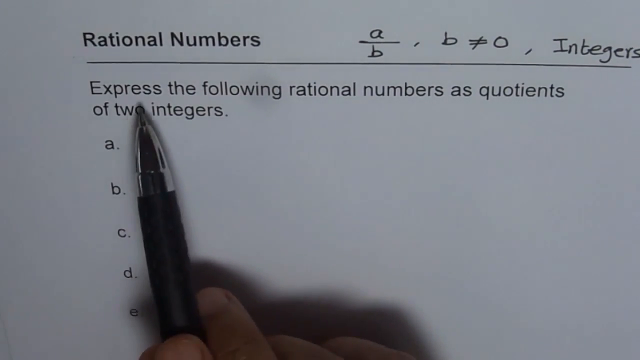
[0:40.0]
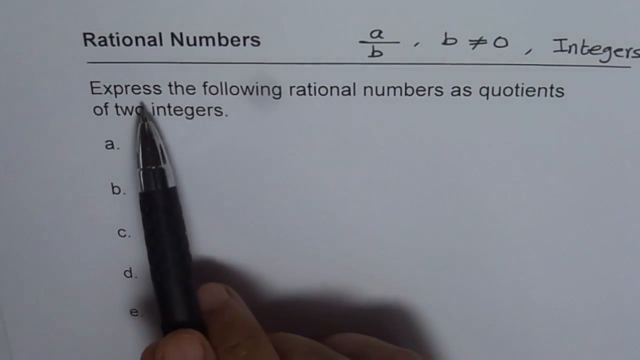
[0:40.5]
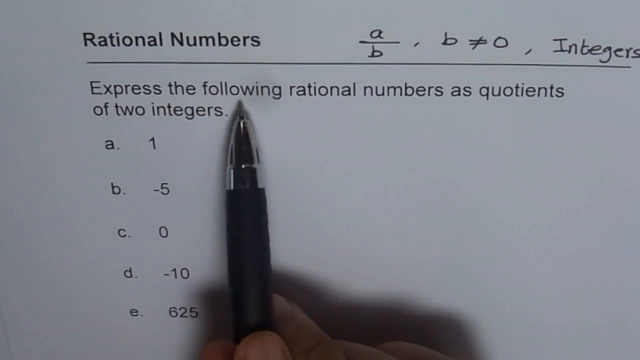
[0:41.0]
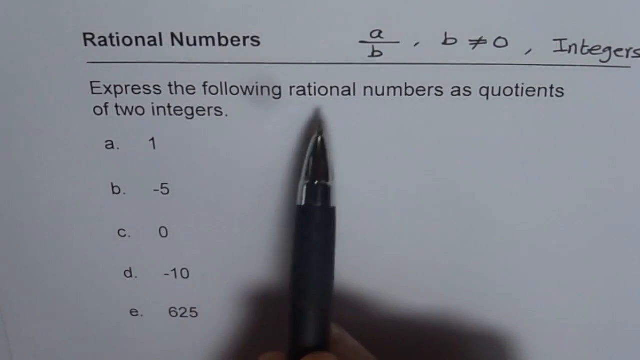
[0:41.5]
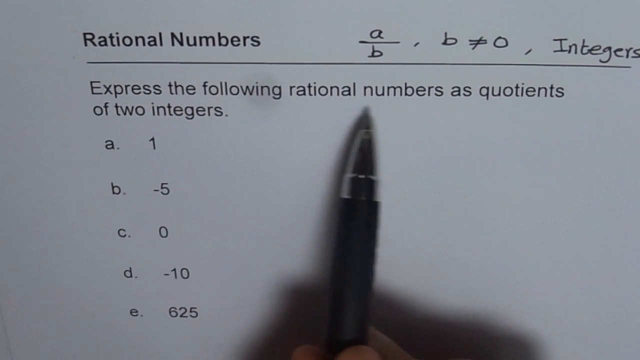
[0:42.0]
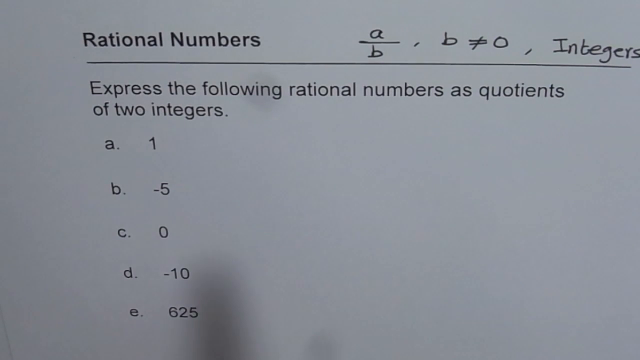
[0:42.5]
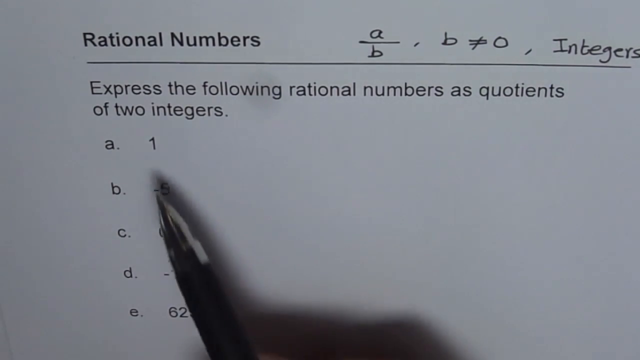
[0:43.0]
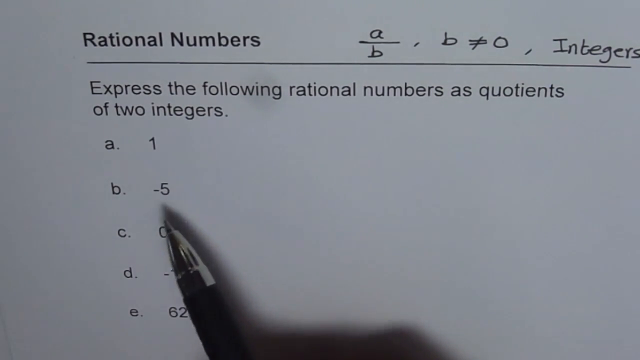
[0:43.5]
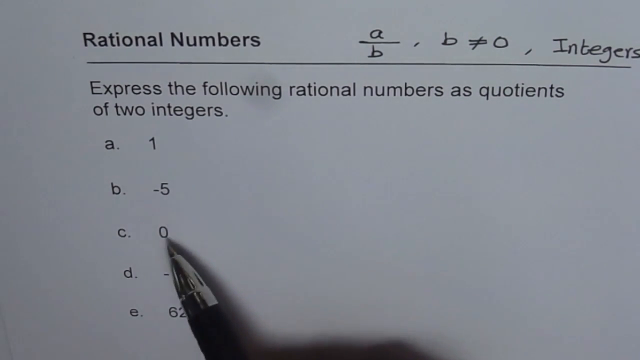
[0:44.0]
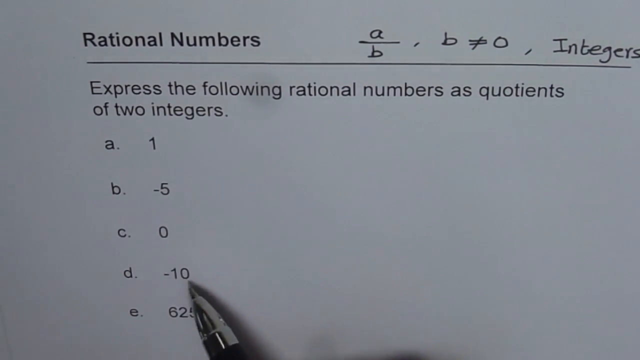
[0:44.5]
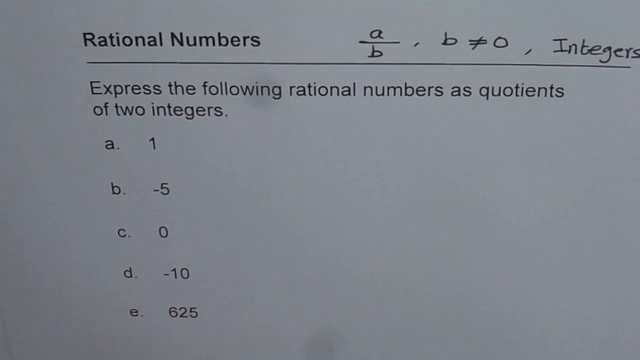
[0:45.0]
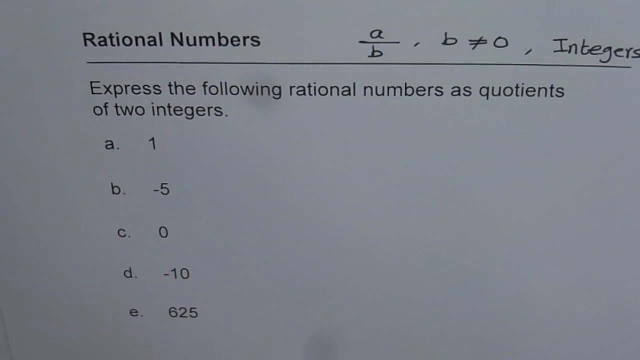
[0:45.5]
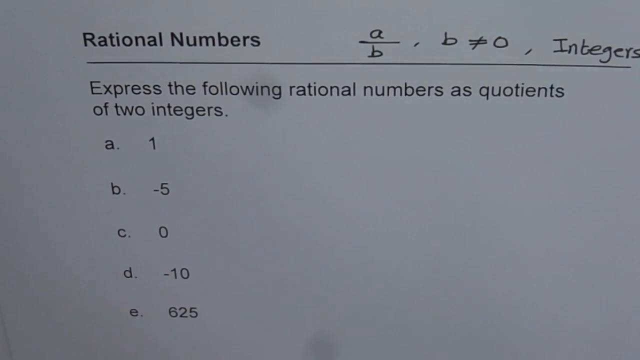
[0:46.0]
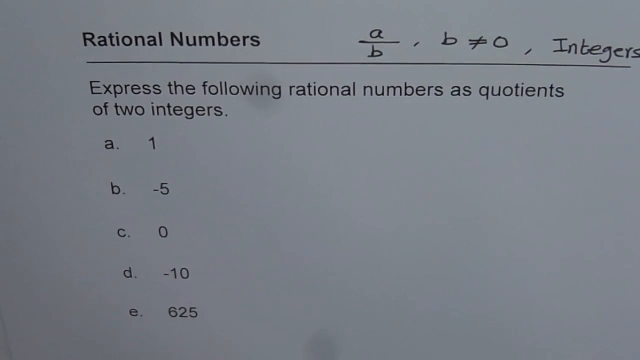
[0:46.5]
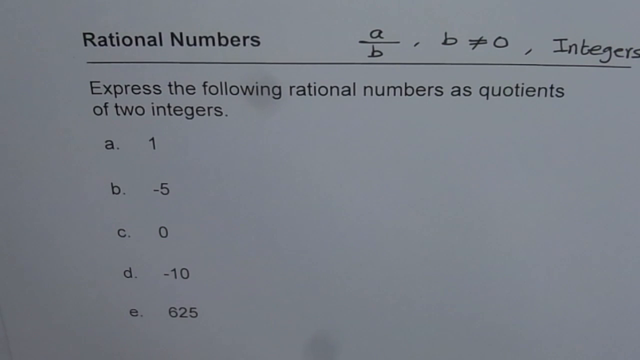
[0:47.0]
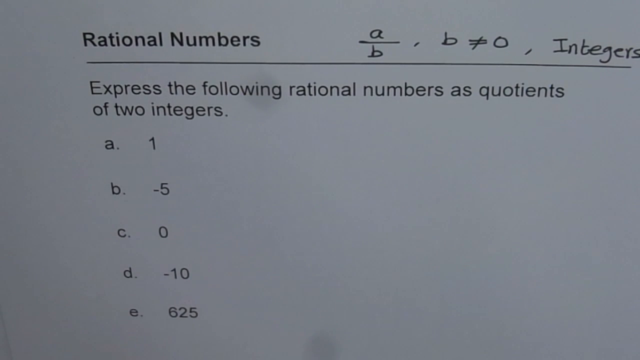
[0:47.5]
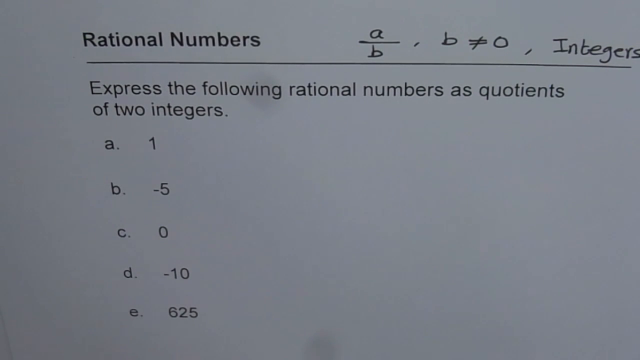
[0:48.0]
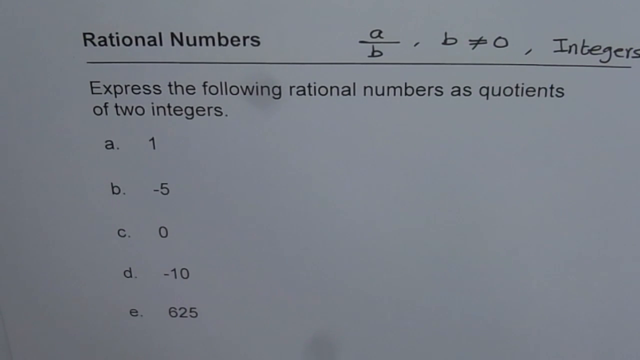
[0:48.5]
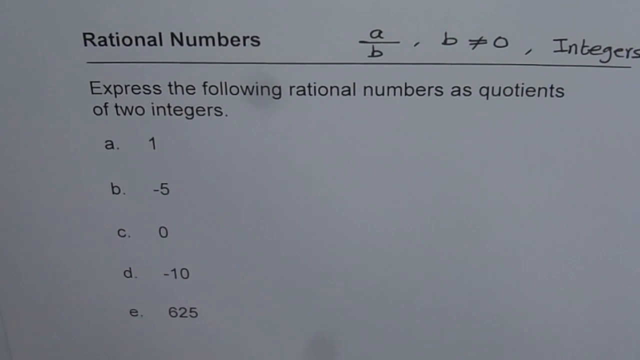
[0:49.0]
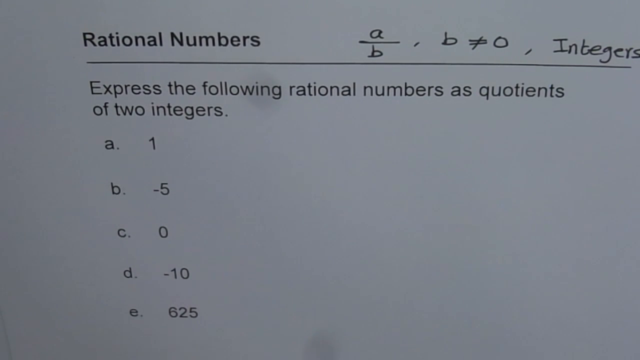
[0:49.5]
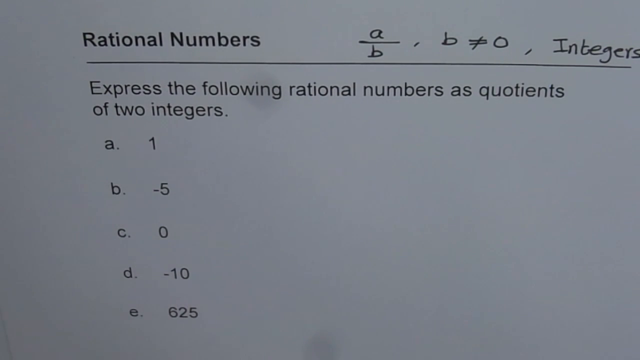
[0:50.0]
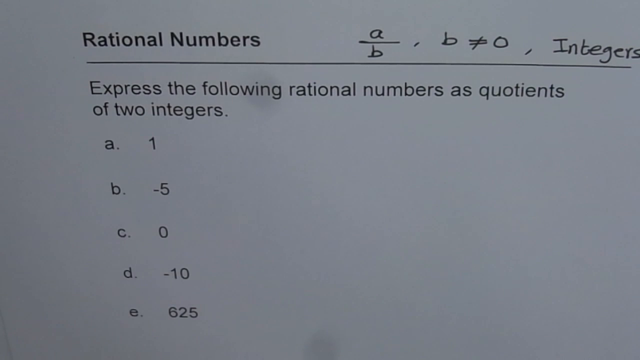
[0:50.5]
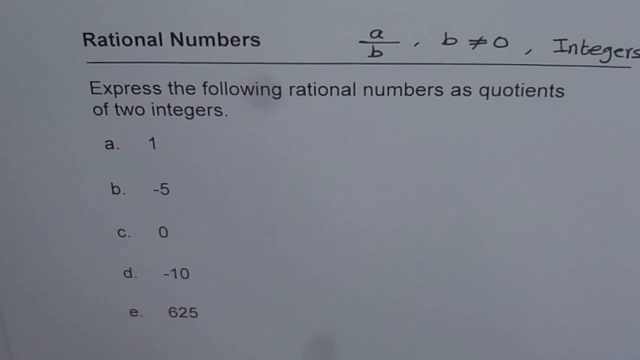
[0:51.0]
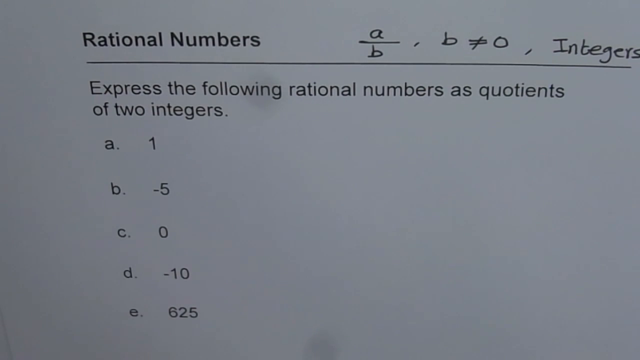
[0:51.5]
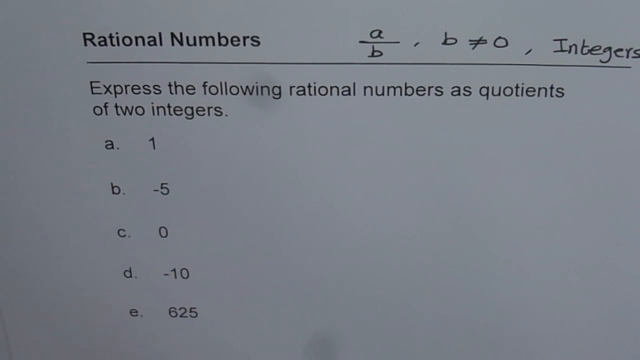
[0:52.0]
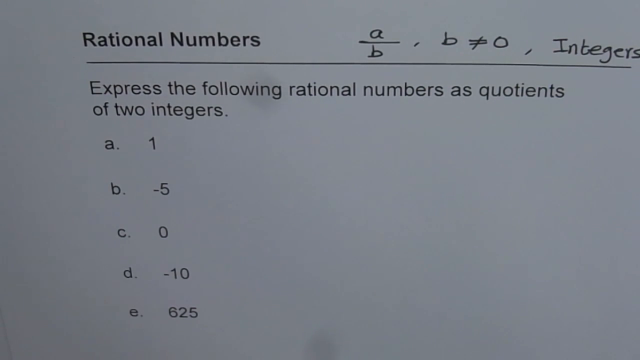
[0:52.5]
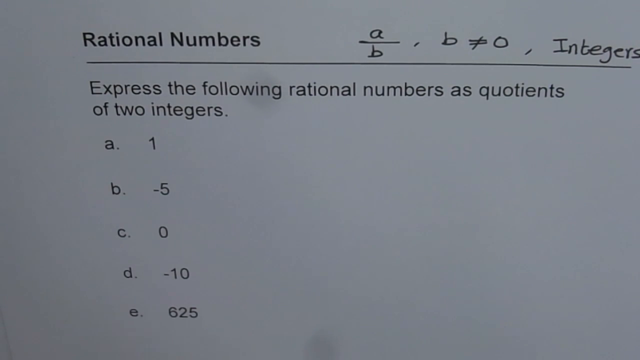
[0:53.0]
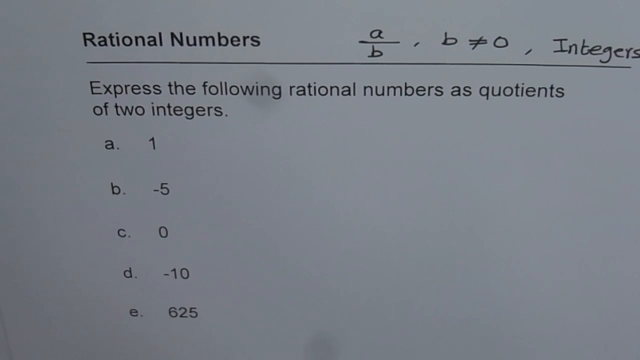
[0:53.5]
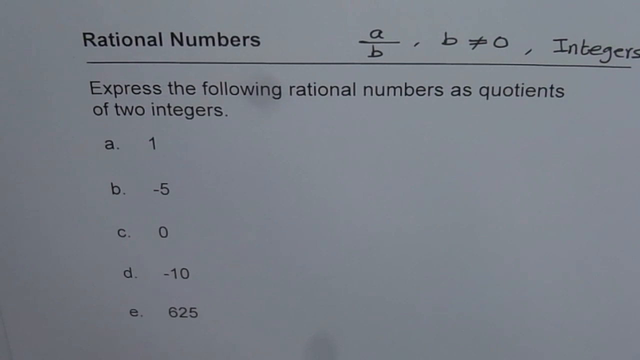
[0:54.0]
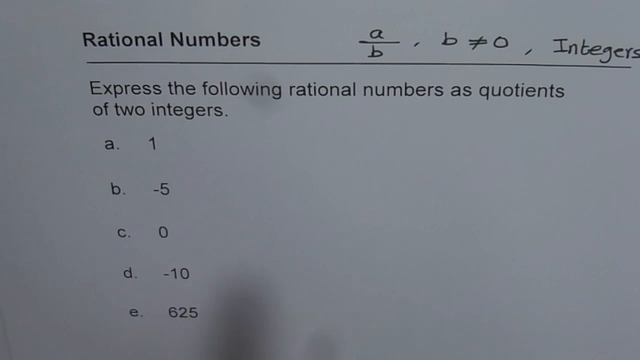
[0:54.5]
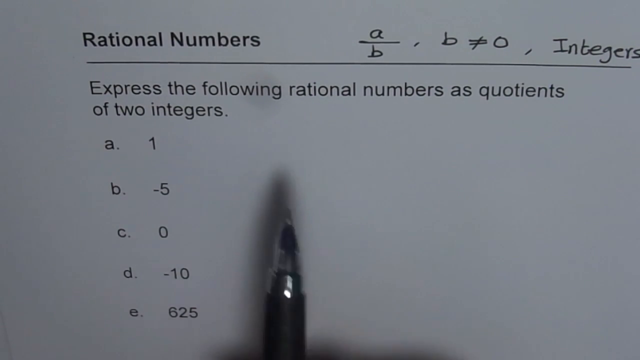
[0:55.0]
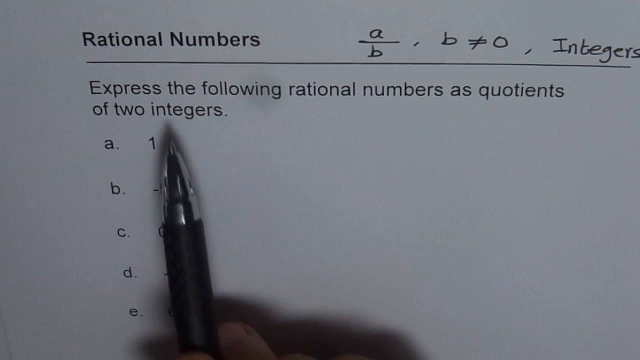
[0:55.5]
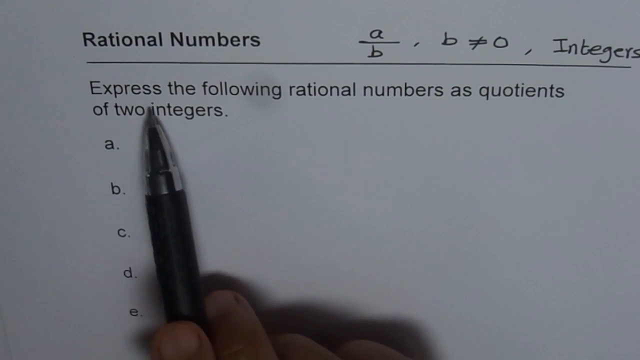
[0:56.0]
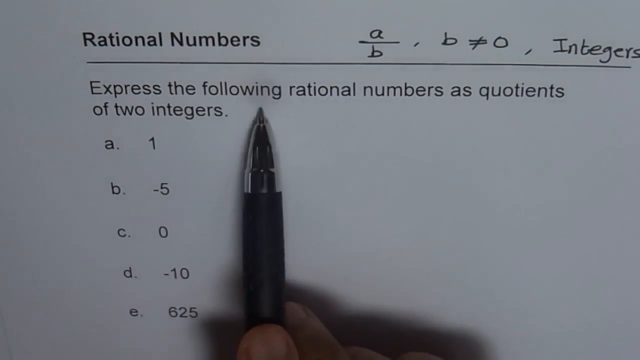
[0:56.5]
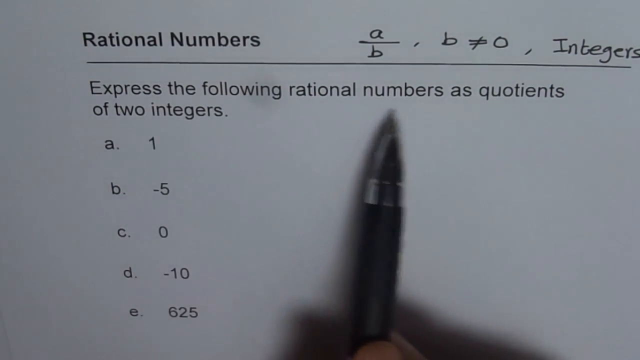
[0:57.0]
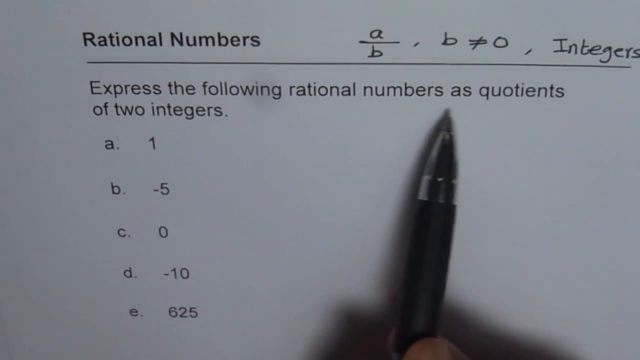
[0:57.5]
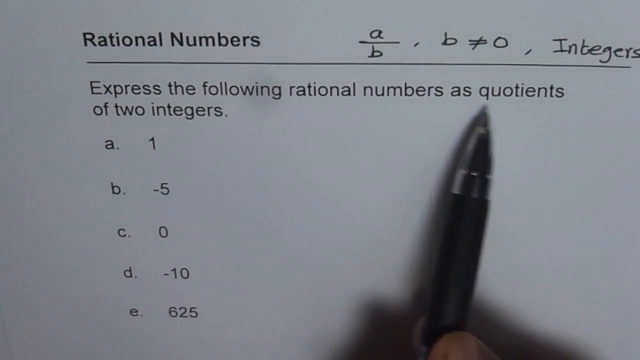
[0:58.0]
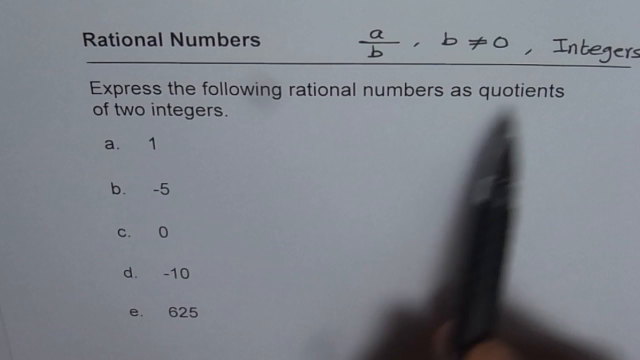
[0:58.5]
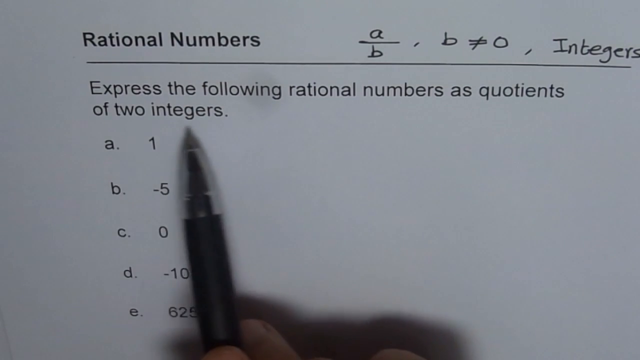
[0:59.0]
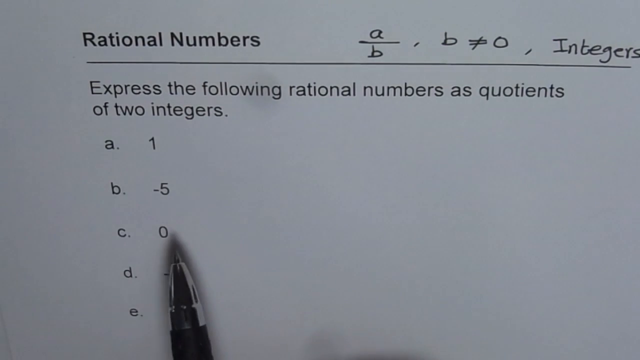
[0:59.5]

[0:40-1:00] The pen moves under the words of the question, "express the following rational numbers as quotients of two integers", tapping a few times underneath some of the words, and then taps on each of the numbers to be expressed as a quotient. The view remains stationary, showing two oil patches on the page: one over the "wing" part of the word "following", possibly where someone touched the paper with their fingertips, and another further down on the white paper, toward the middle at the bottom. He points at the words in the question again with the tip of the pen and then moves the tip down to the number zero. He has still not demonstrated any of the calculations.